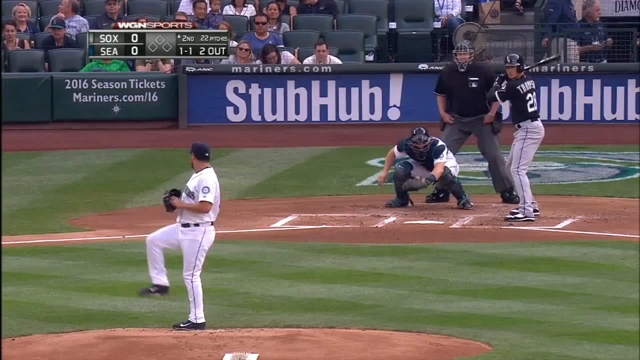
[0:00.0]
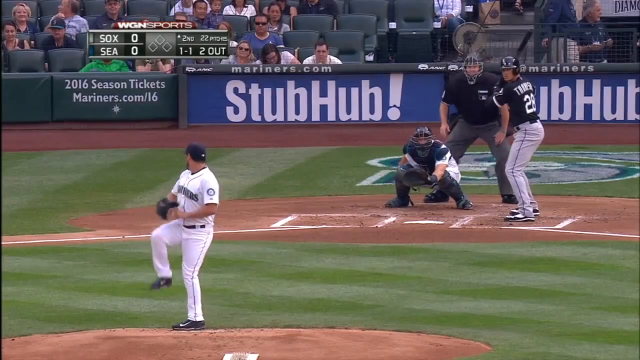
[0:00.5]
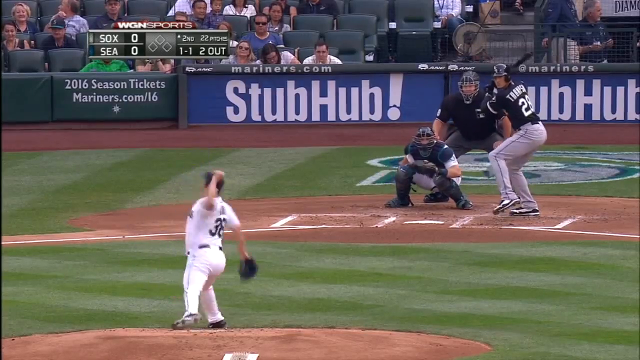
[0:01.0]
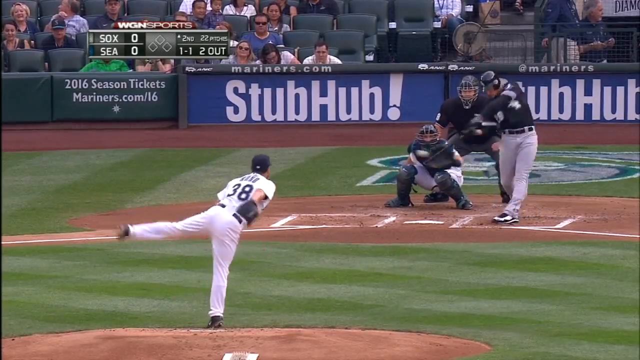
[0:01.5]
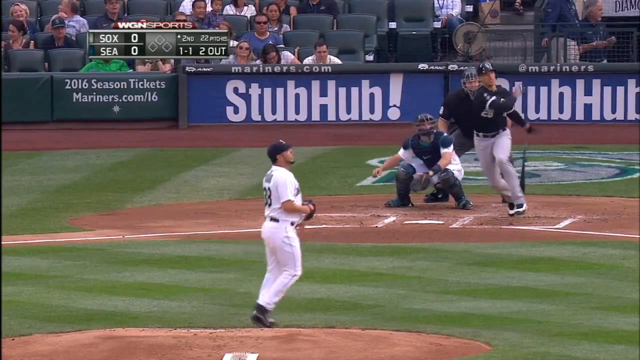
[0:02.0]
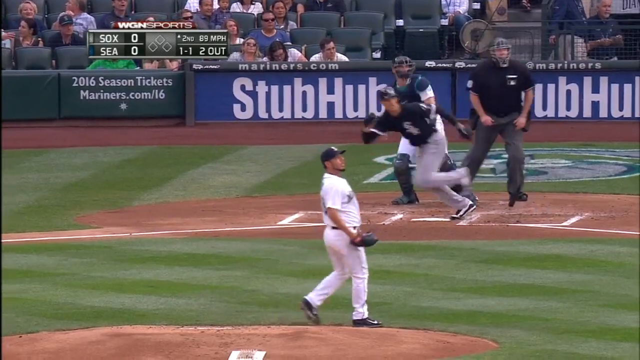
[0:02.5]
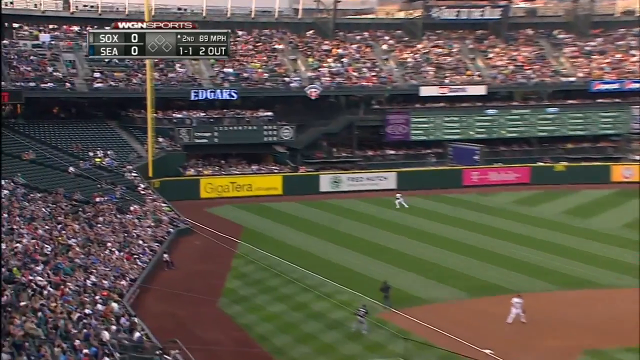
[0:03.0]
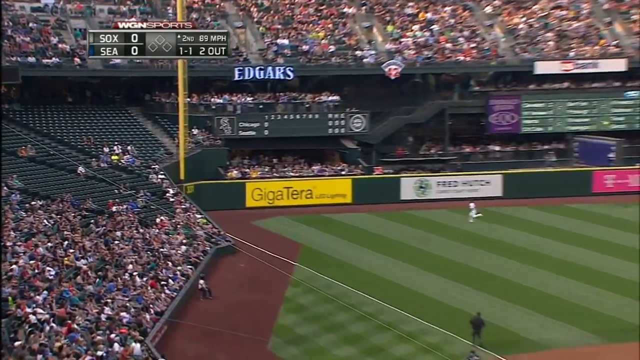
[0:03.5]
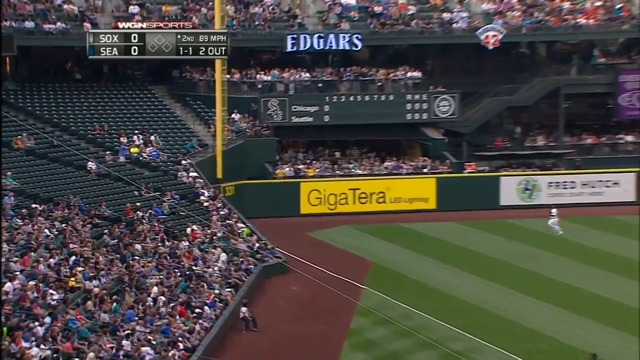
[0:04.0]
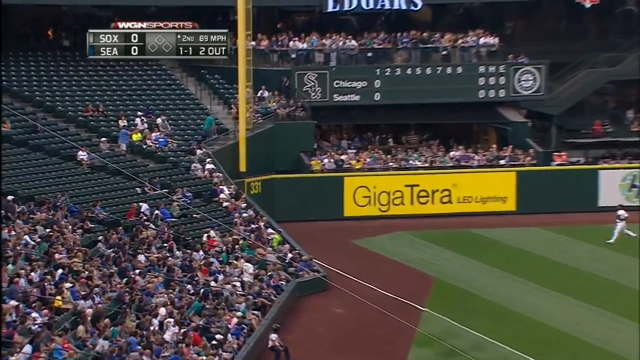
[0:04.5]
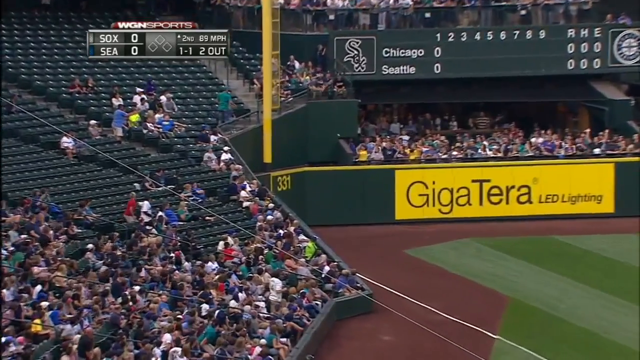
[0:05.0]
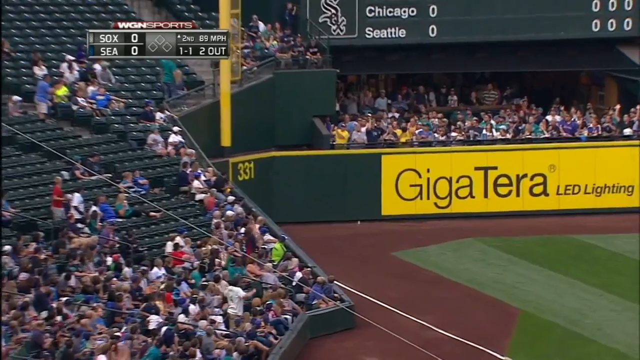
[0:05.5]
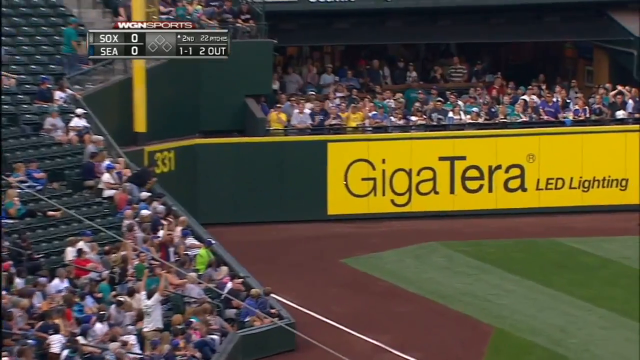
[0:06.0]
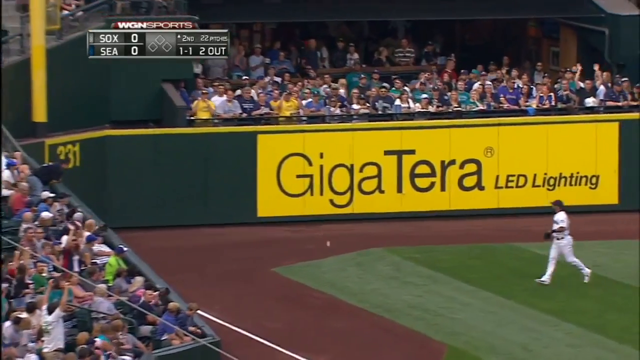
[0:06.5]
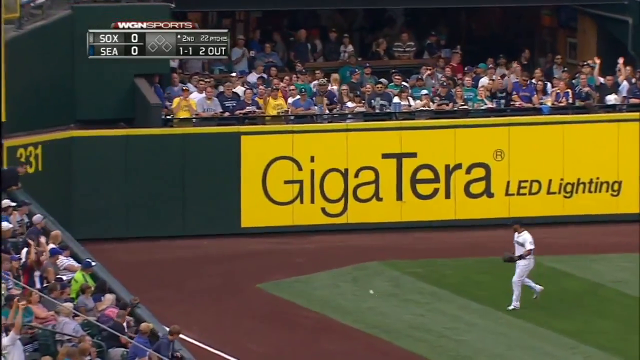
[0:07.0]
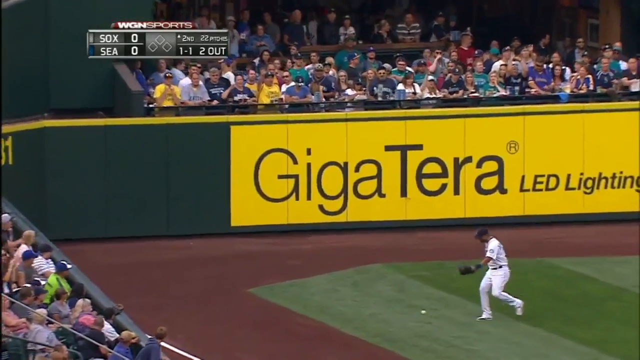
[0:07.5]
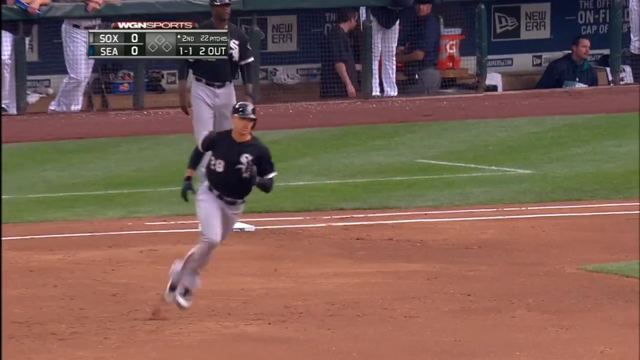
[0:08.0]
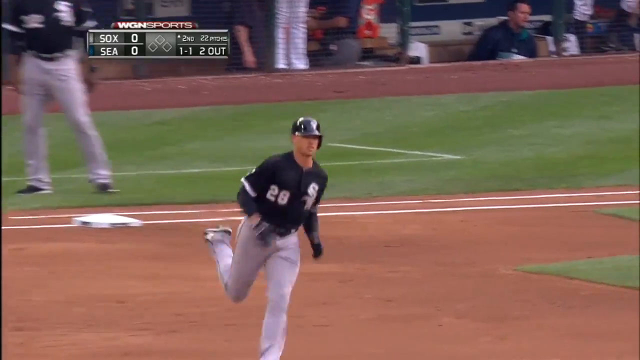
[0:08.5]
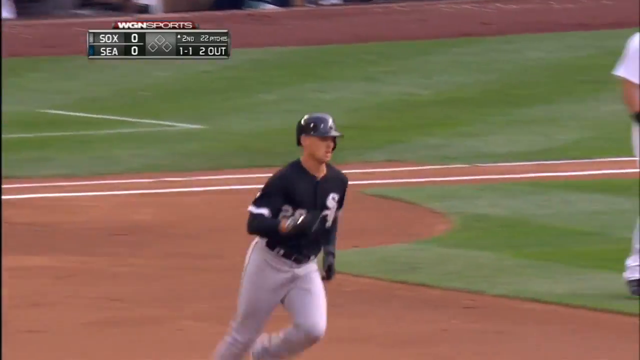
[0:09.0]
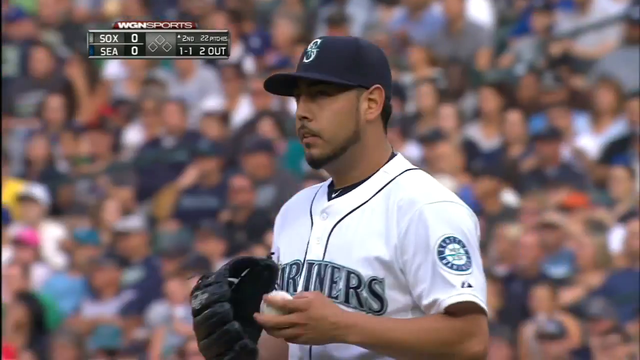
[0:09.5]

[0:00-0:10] A baseball game is underway. The pitcher, wearing a white shirt and pants, throws a pitch to a batter, who swings, connects, and hits the ball into left field. The left fielder is unable to catch it because it is a home run, and the batter runs around the bases back to home plate. The batter wears a dark blue shirt and grey pants. In the background are the words "TheMariners.com" and "2016 season tickets Mariners," along with a score reading "Sox 0 Mariners 0."